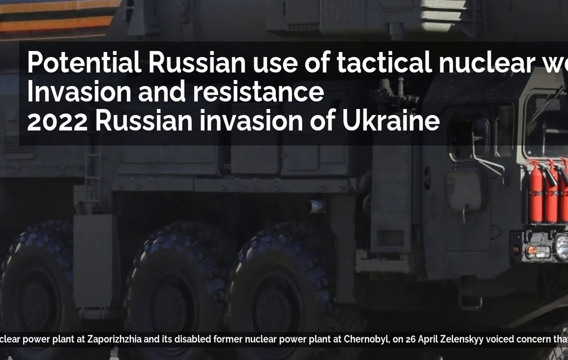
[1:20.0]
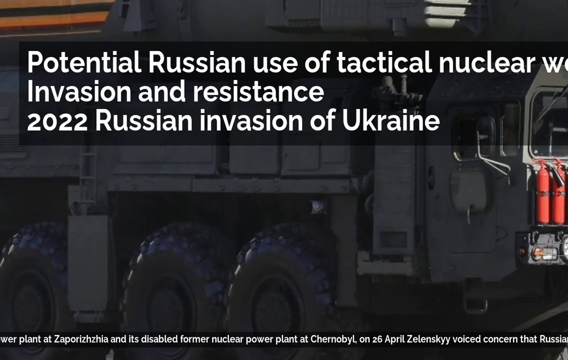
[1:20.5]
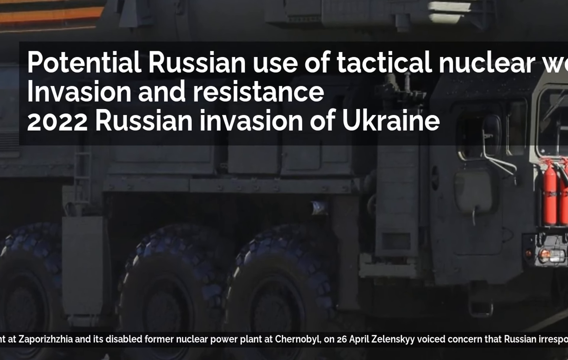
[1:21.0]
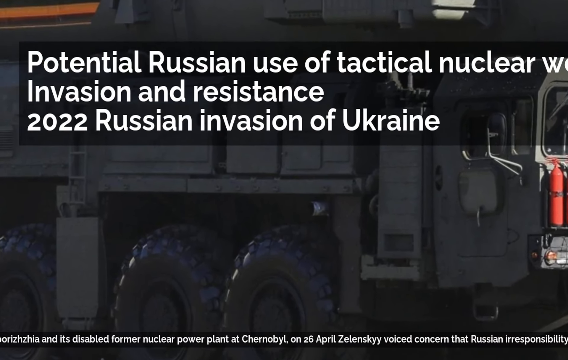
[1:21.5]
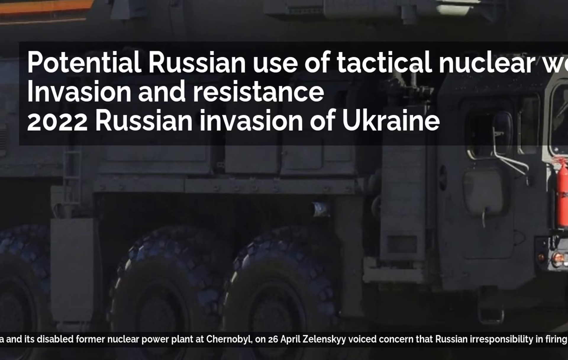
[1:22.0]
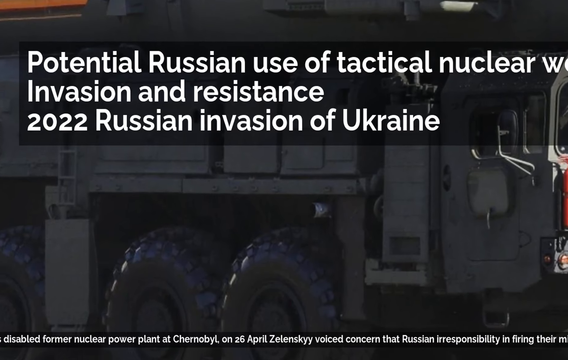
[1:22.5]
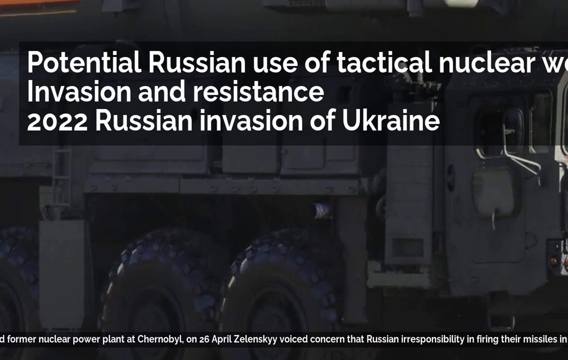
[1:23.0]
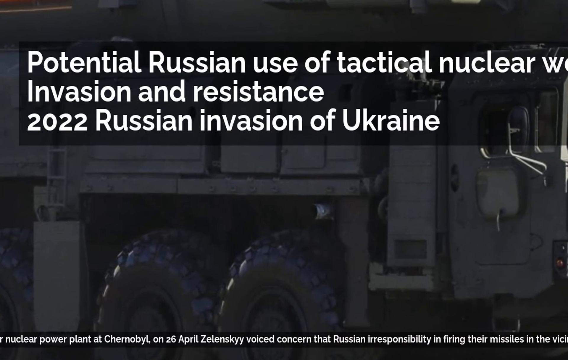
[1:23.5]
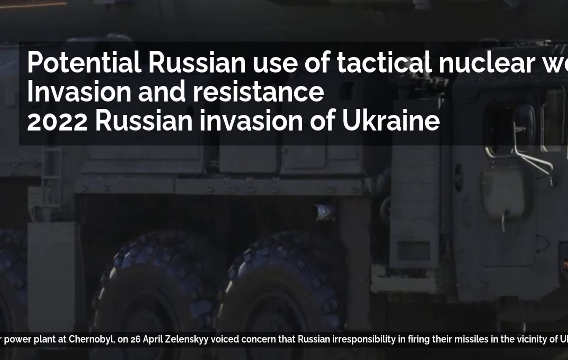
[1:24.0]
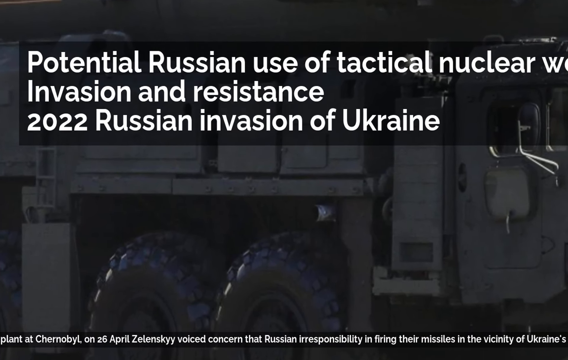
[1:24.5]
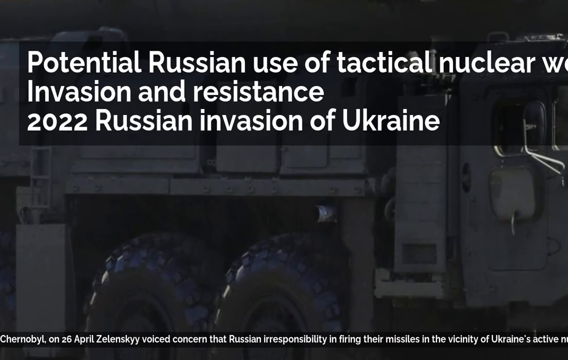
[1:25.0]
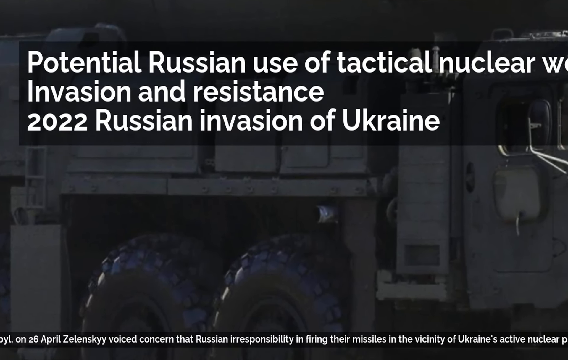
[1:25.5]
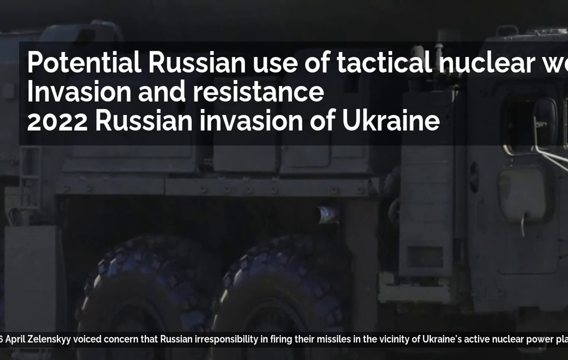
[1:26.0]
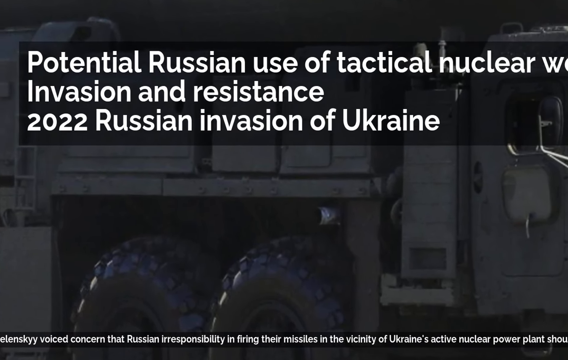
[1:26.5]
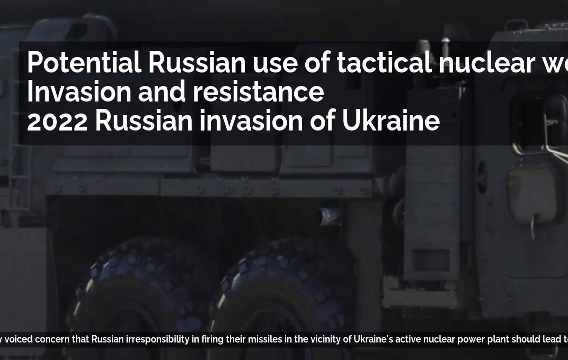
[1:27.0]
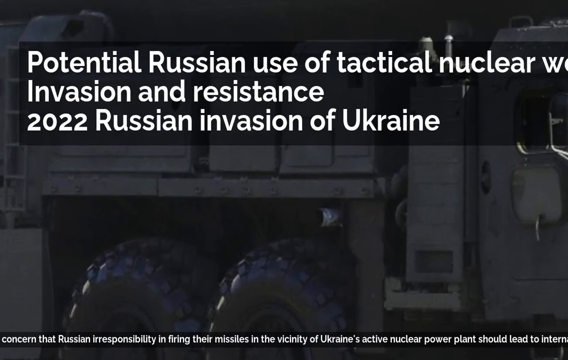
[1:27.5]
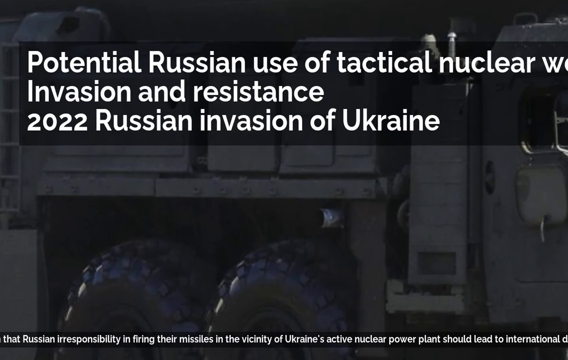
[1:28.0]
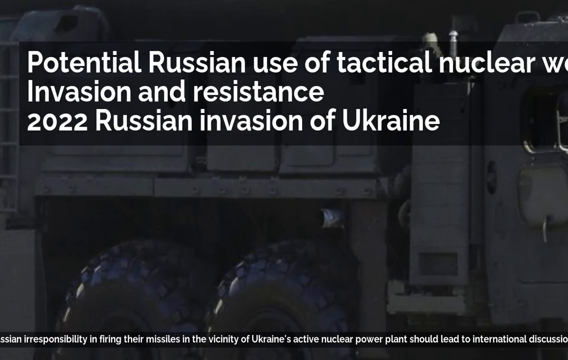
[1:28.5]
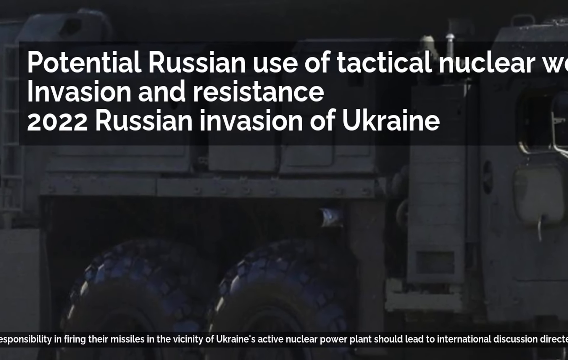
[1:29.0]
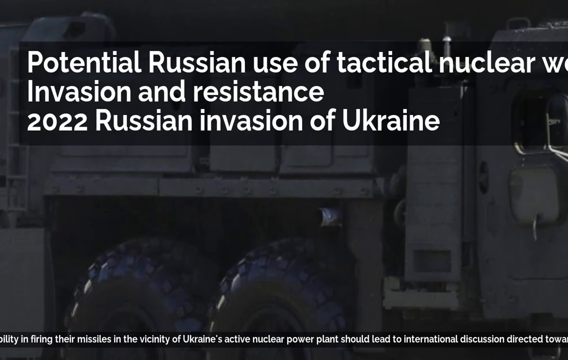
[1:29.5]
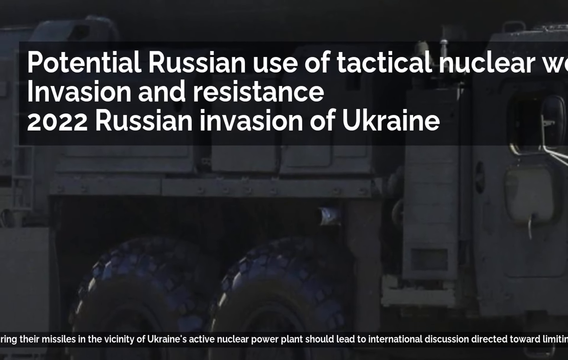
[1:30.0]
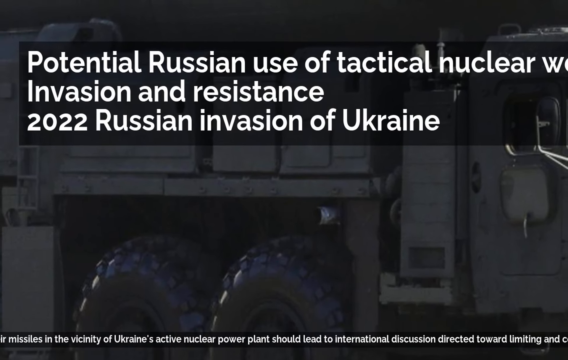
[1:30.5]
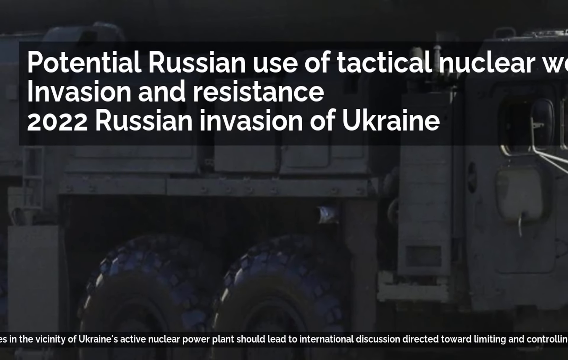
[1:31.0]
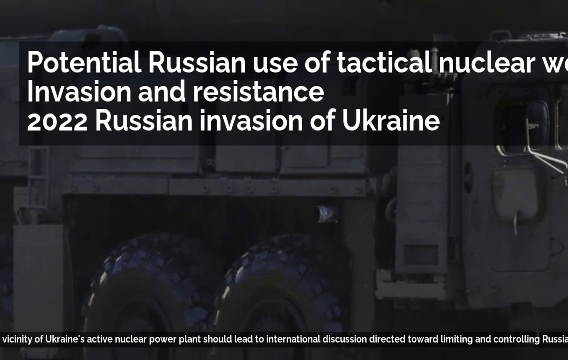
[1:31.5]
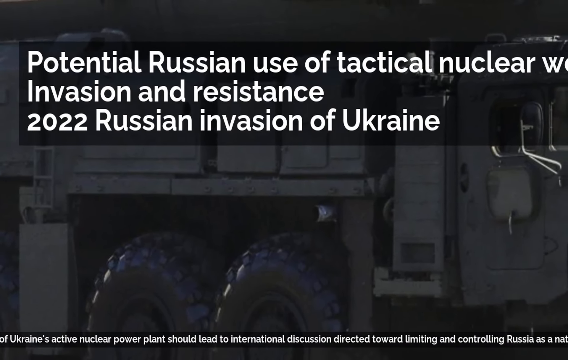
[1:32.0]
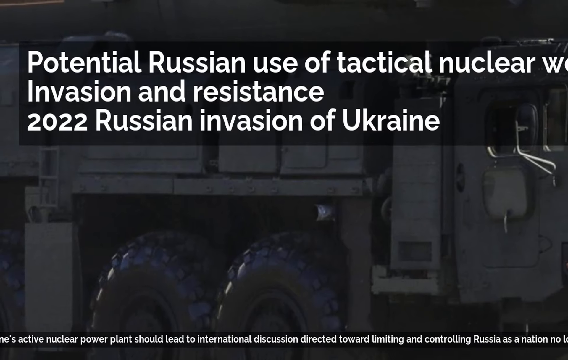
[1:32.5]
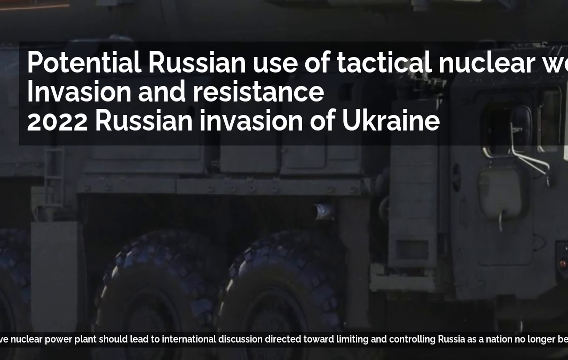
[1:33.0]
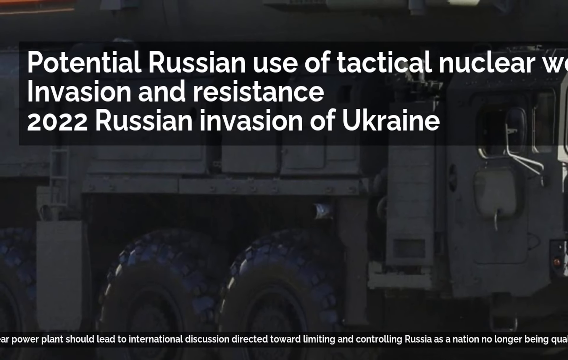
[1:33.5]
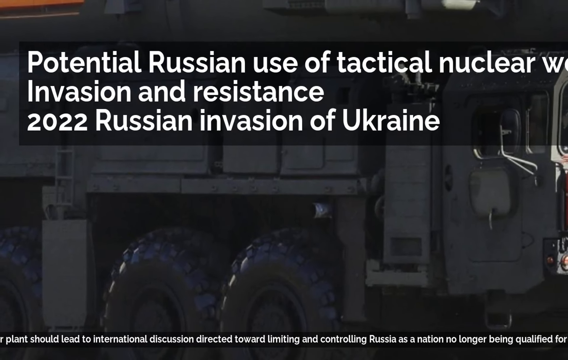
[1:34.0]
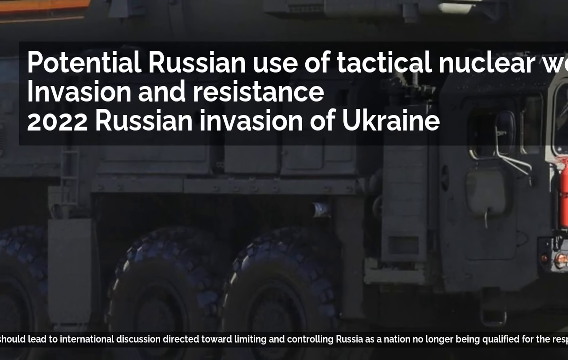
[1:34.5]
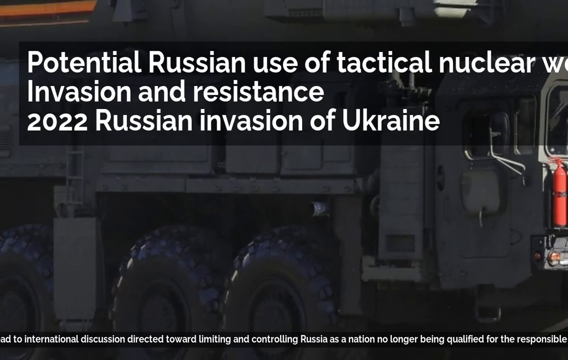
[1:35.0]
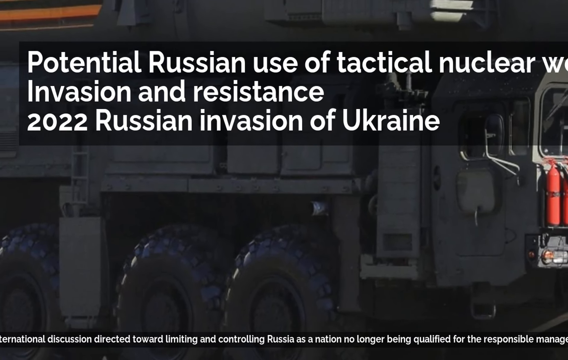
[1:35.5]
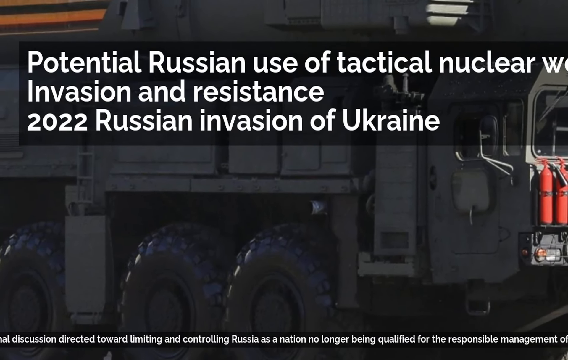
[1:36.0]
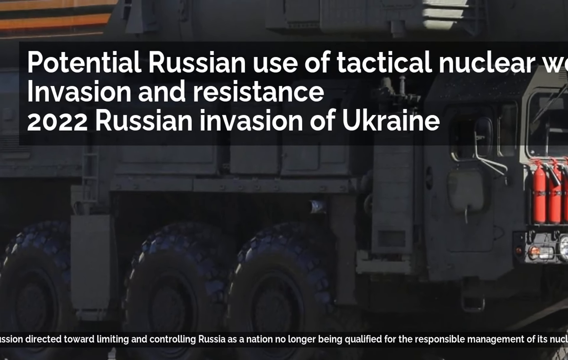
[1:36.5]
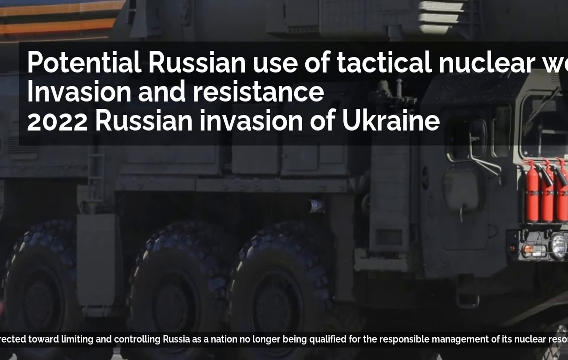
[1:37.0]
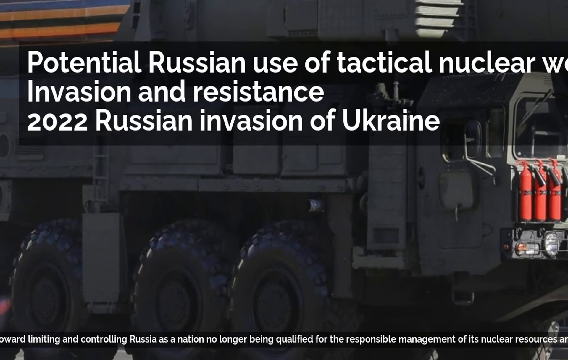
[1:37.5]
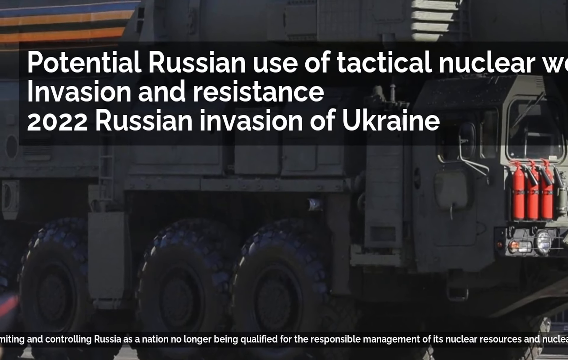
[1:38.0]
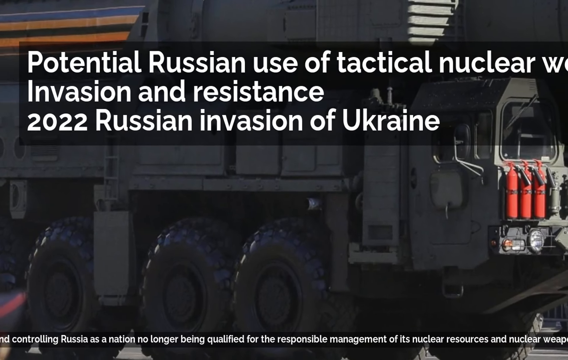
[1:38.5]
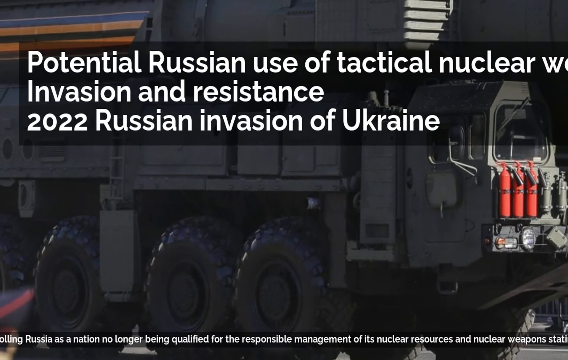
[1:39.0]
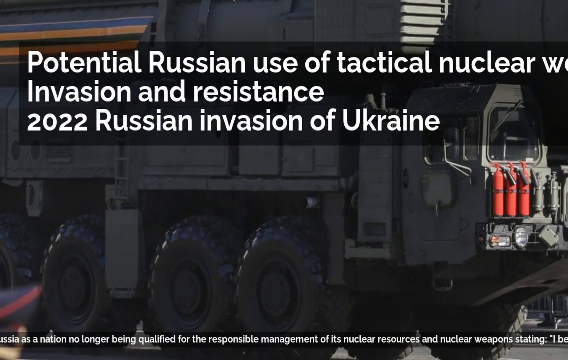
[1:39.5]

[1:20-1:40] The cab at the front is so high off the ground that there is a rail or a stepper for the driver to stand on and pull himself up into the cab. The ribbon text at the bottom continues: "on the 26th of April. Zelensky voiced concern that Russian irresponsibility in firing the missiles in the vicinity of Ukraine's active nuclear power plant should lead to international discussion directed toward limiting and controlling Russia as a nation no longer being qualified for the responsible management of its nuclear resources and nuclear weapons. Stating, I believe that."